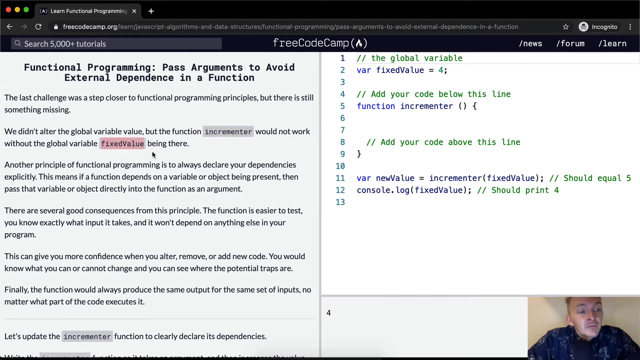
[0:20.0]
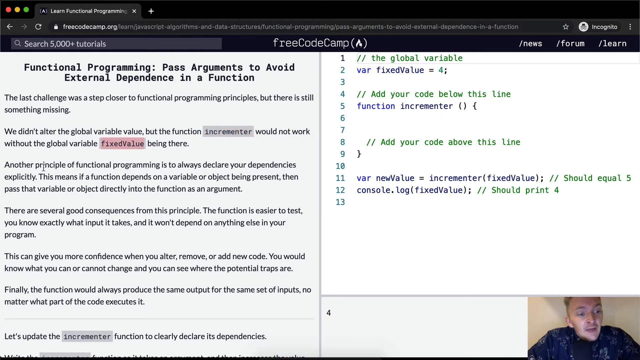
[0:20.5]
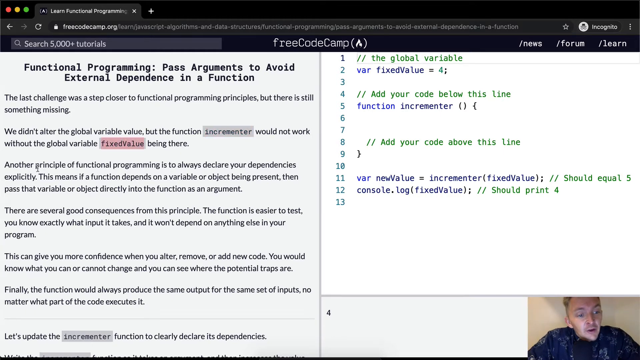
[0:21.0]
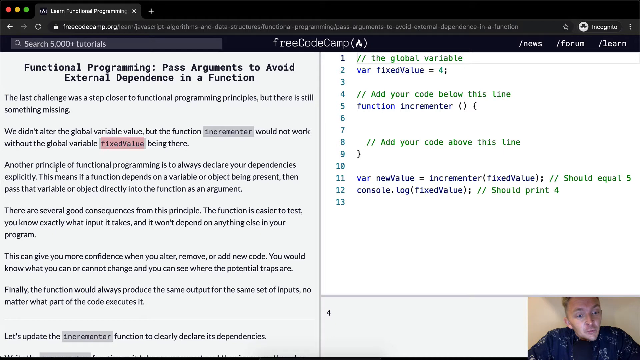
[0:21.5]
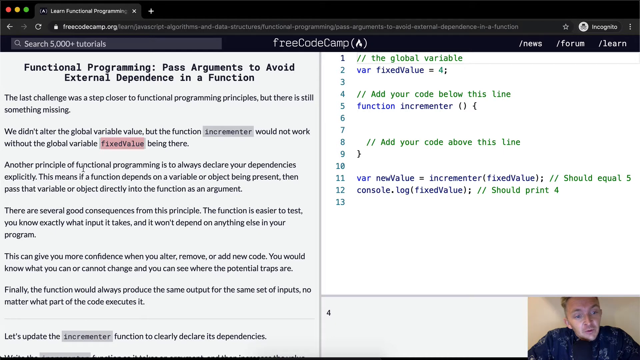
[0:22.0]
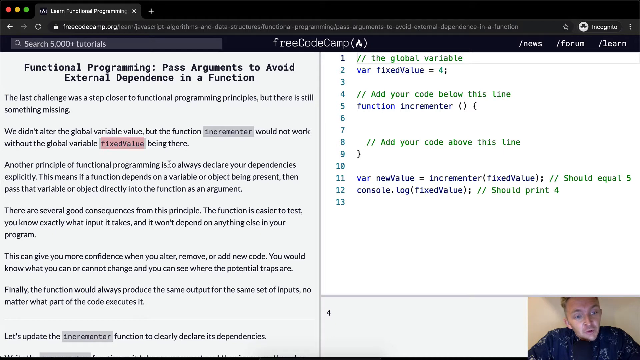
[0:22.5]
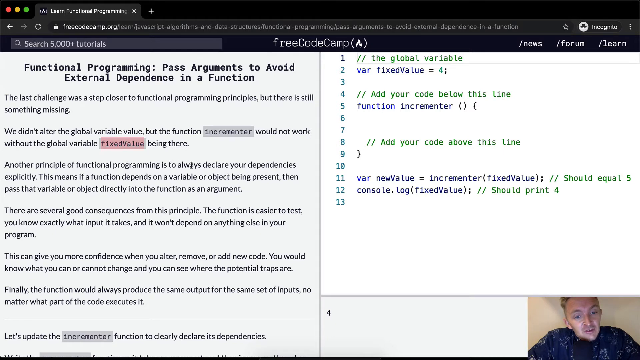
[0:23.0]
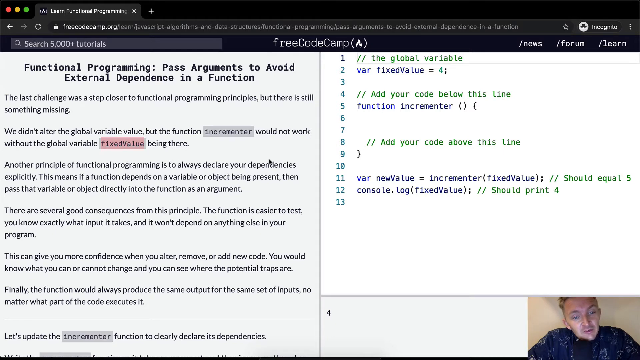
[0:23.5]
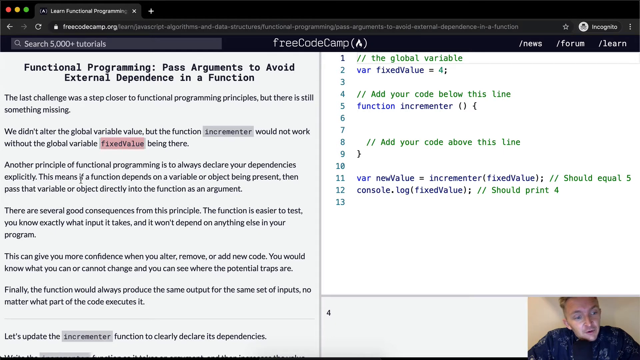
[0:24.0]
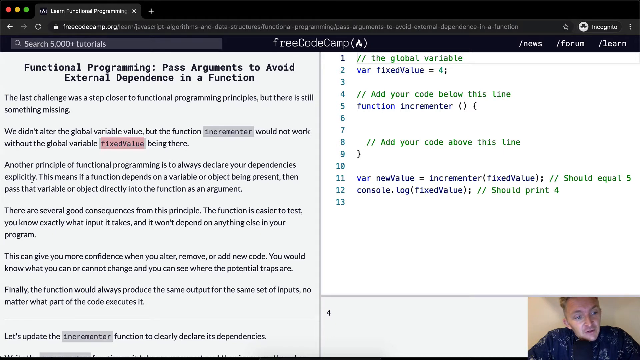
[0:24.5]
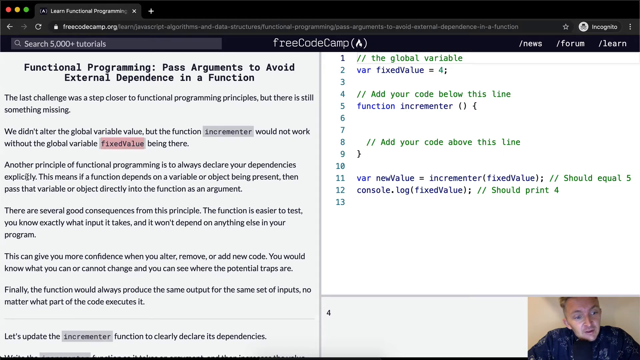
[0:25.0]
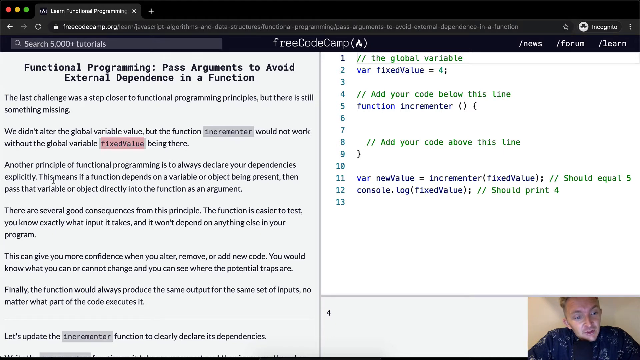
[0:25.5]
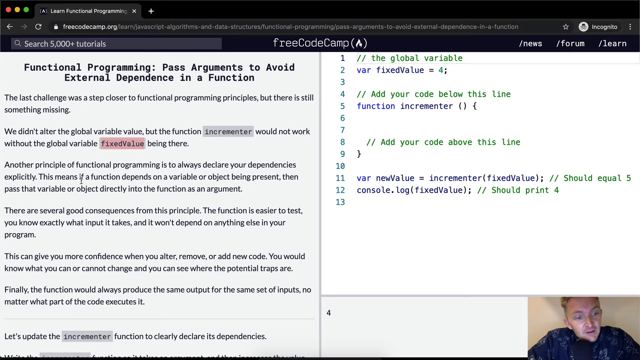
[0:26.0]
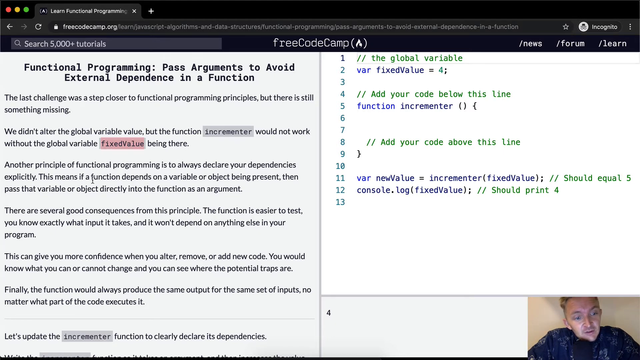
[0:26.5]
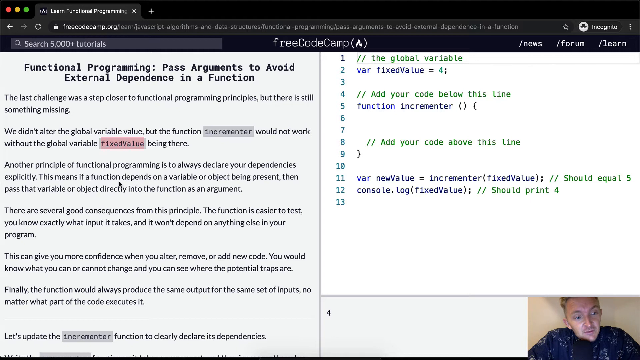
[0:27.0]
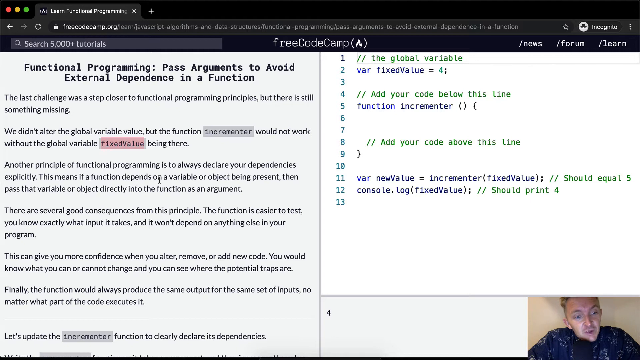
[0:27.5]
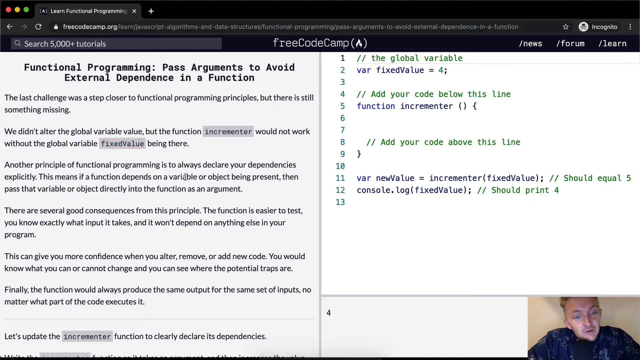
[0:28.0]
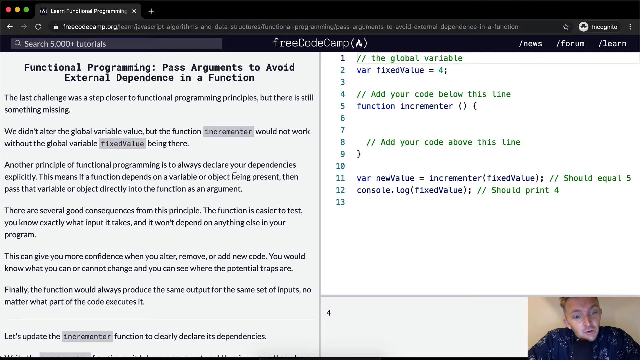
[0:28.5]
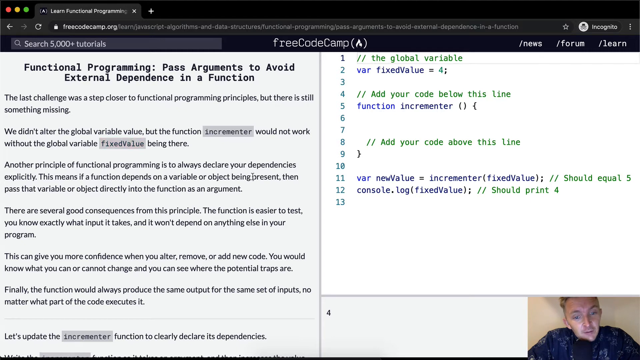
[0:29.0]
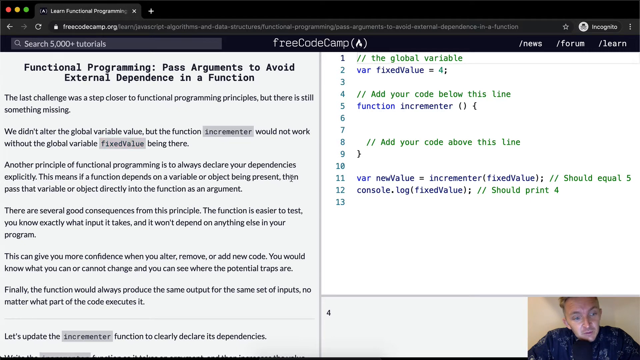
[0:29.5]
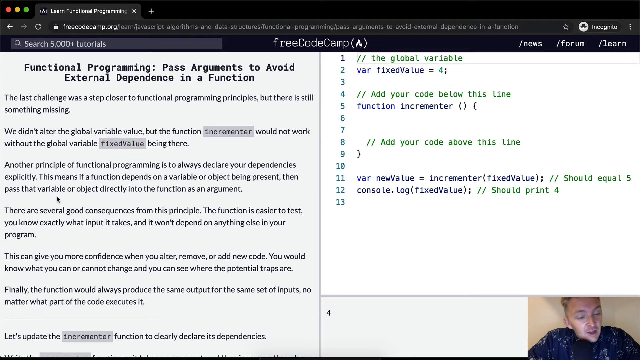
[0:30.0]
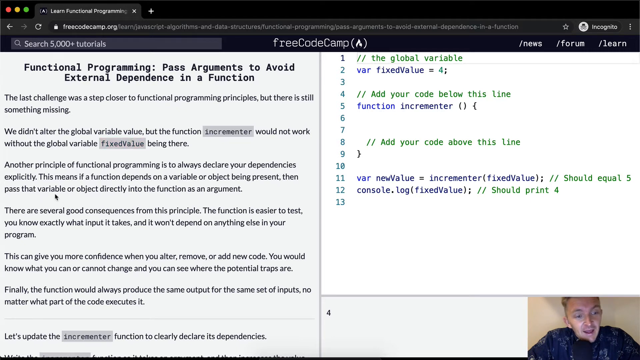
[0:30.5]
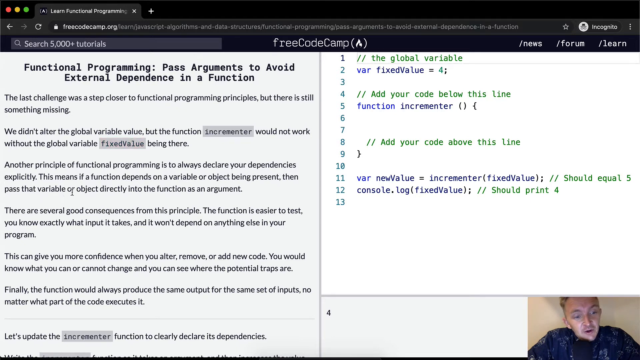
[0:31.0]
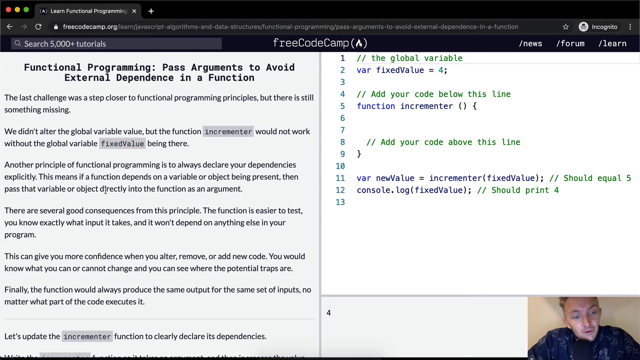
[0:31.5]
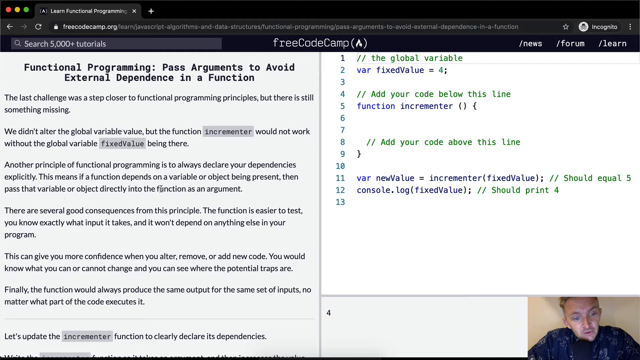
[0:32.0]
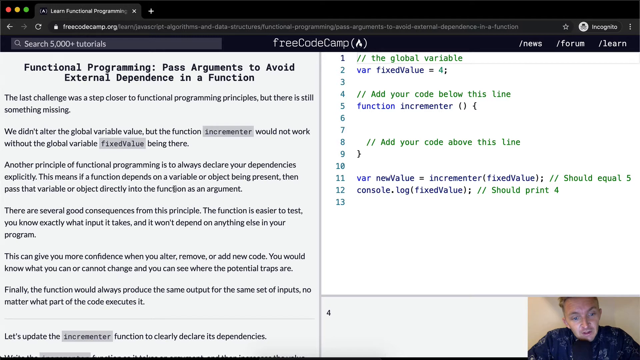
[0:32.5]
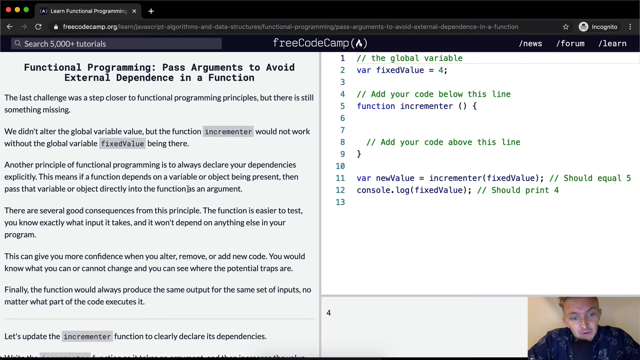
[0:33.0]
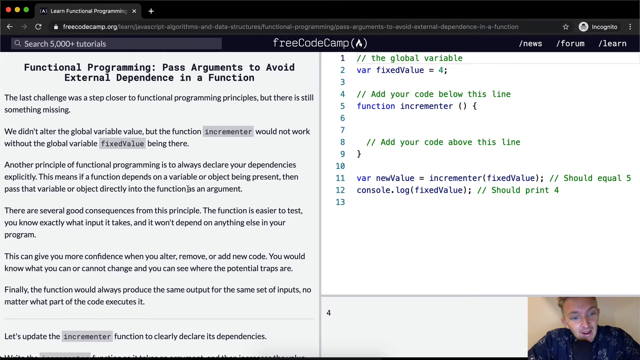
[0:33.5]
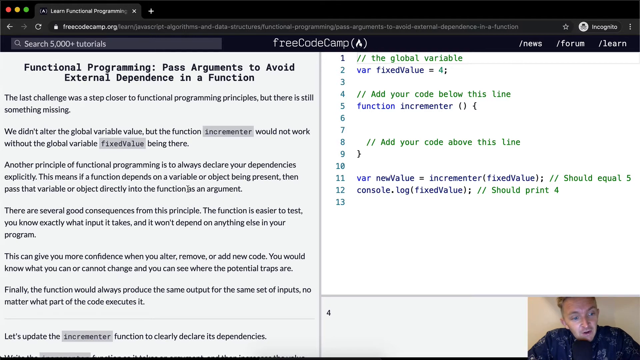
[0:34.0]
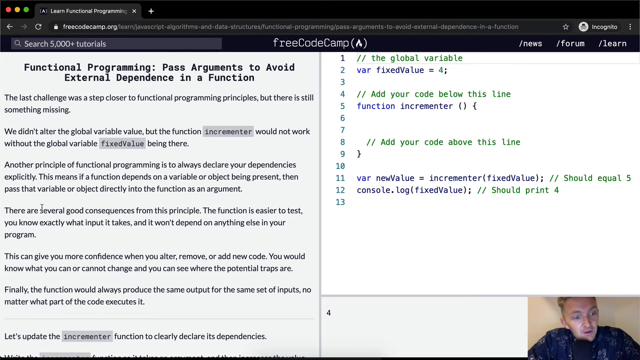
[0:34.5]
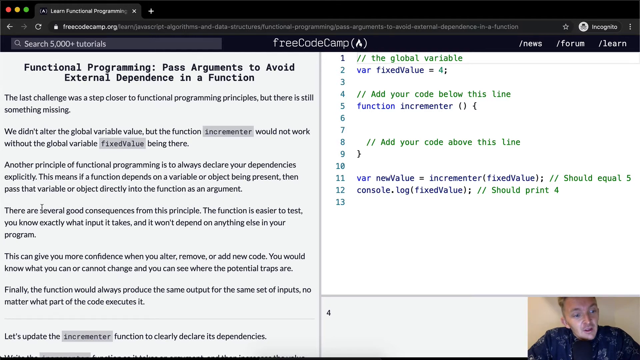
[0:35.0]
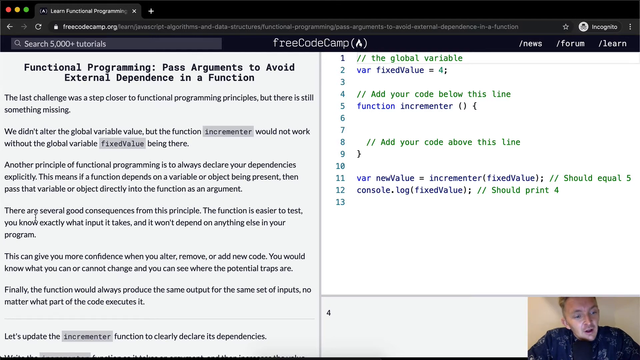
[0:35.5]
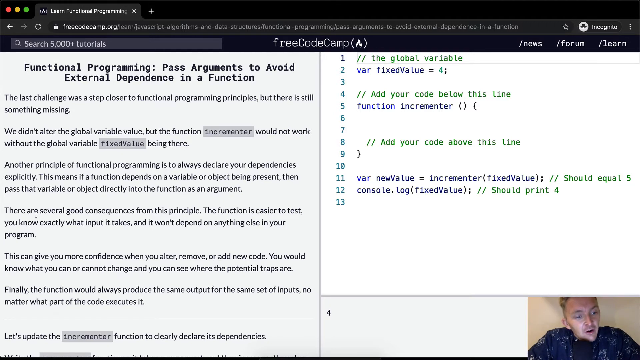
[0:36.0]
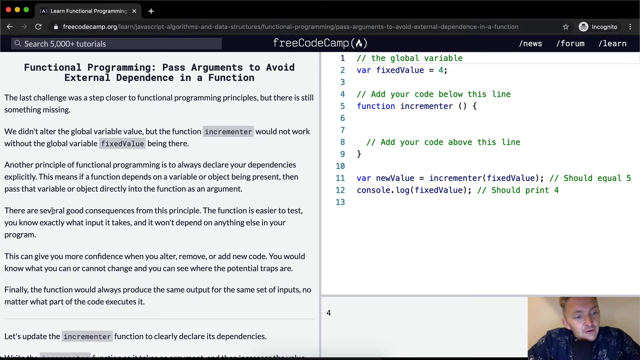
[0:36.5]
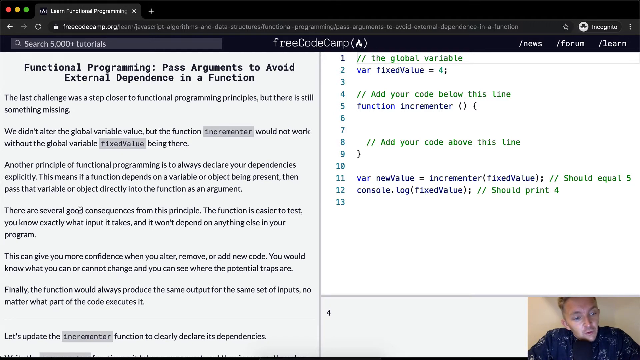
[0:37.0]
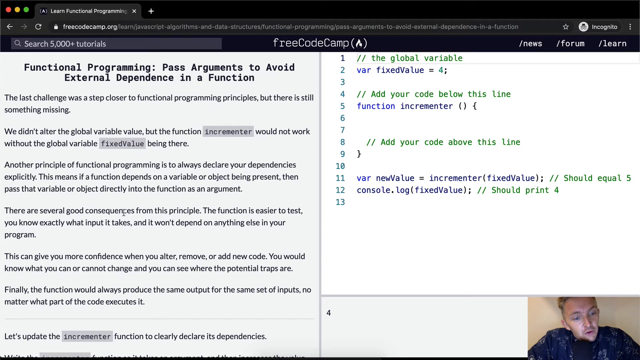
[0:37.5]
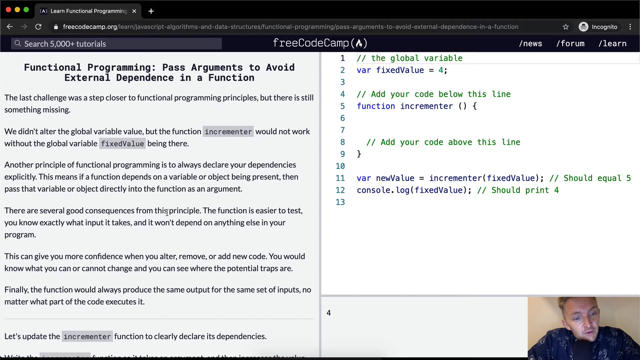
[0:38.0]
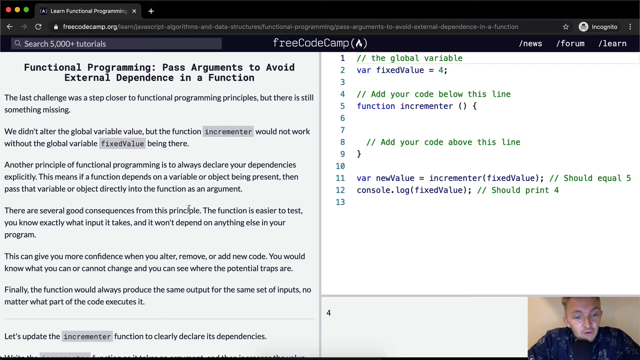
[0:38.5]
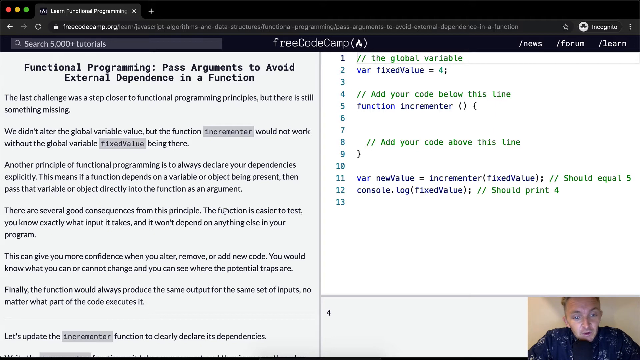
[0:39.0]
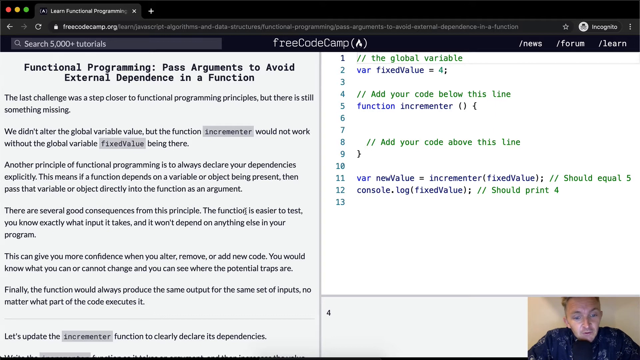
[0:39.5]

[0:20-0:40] The passage on functional programming and how to avoid external dependency in a function continues. Text in it reads "Another principle of functional programming is to always declare your dependency explicitly. This means if a function depends on a variable or an object being present then pass that variable object directly into the function as an argument. There are several good consequences from this principle." It also reads "Finally the function would always produce the same output for the same set of inputs no matter what part of the code executes it" and "Let's update the increment." Each word, method and step is displayed in the passage.